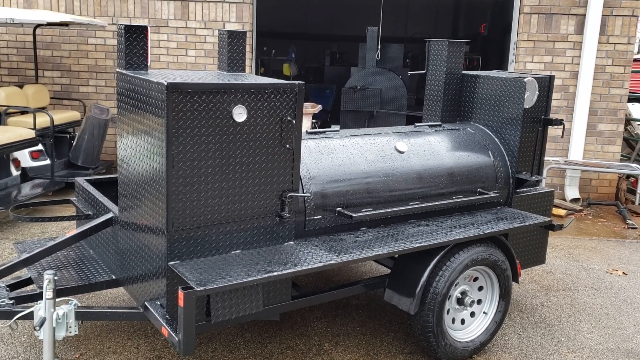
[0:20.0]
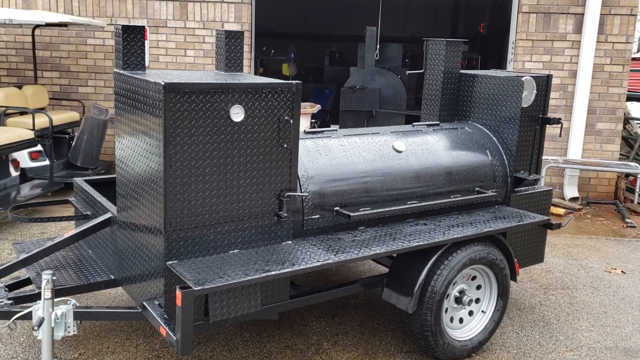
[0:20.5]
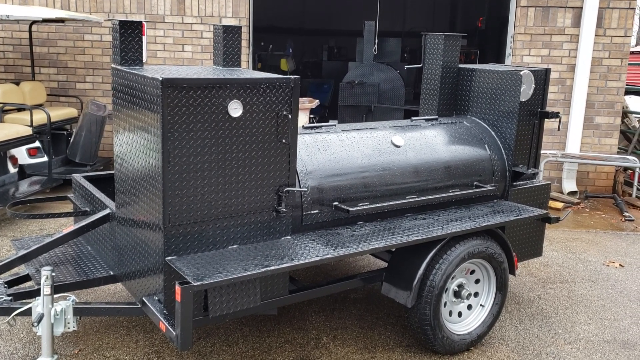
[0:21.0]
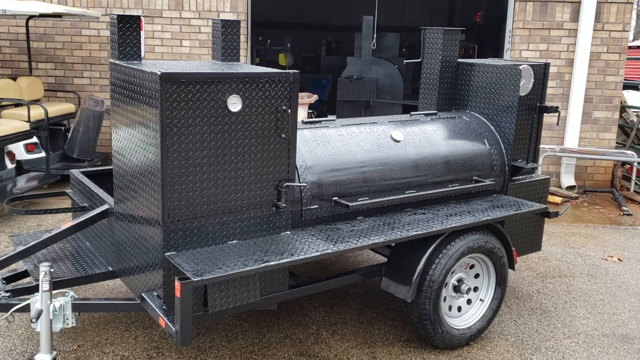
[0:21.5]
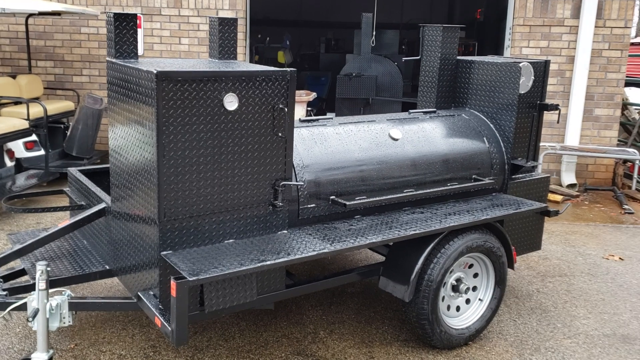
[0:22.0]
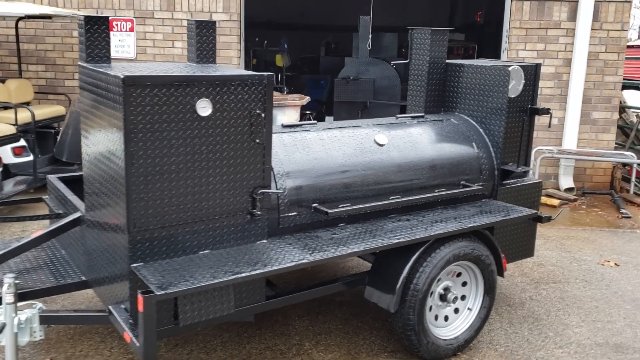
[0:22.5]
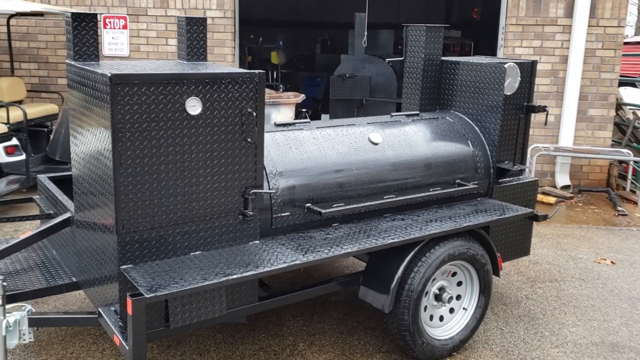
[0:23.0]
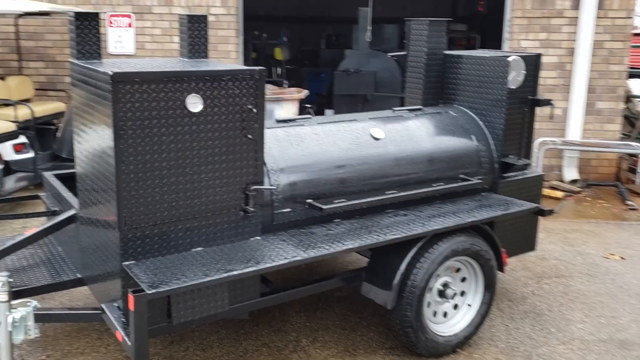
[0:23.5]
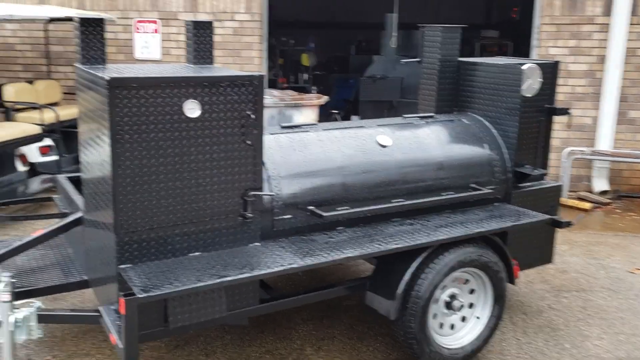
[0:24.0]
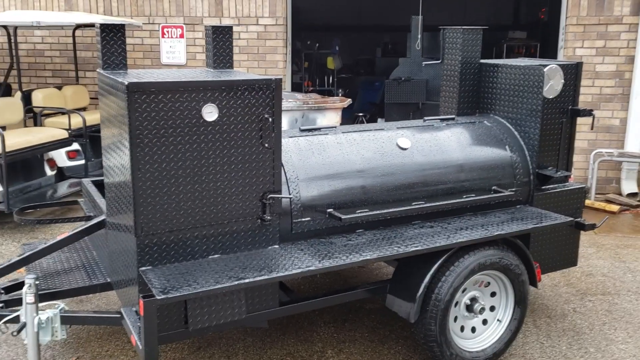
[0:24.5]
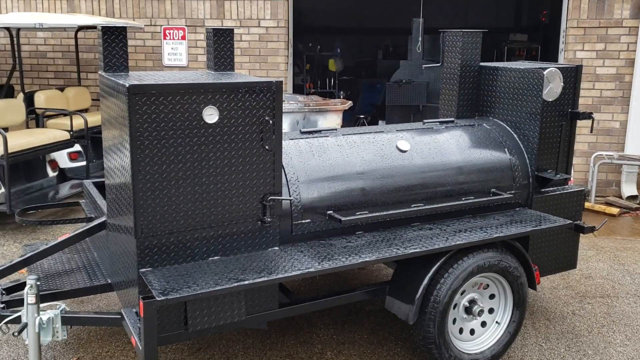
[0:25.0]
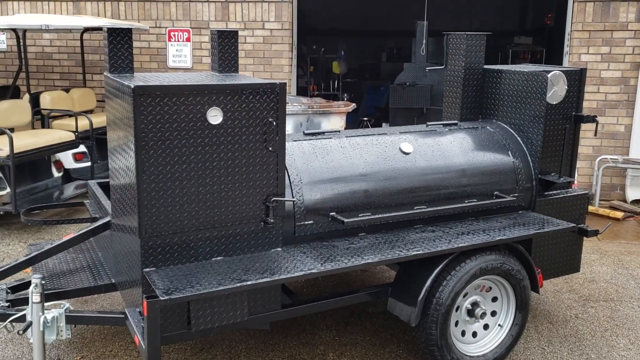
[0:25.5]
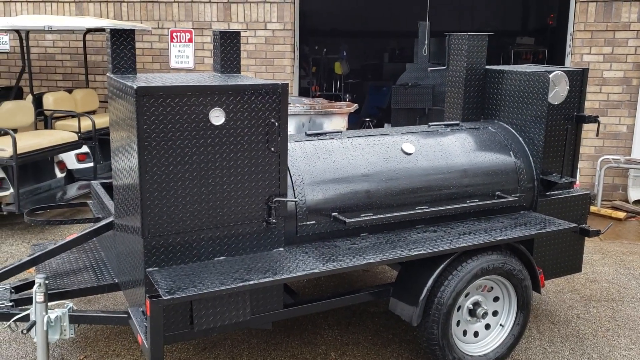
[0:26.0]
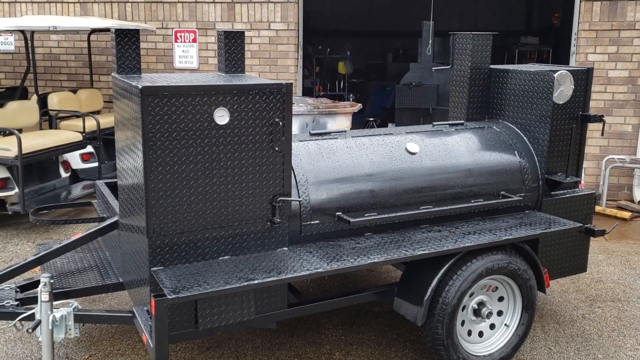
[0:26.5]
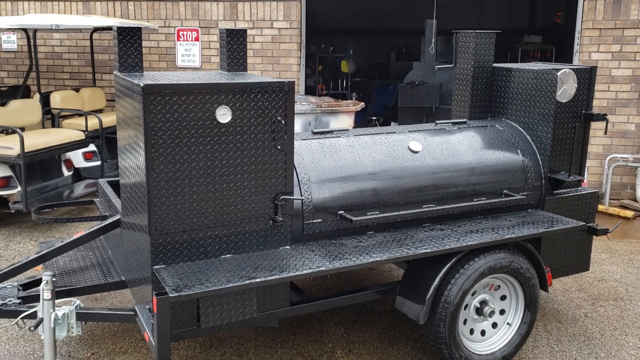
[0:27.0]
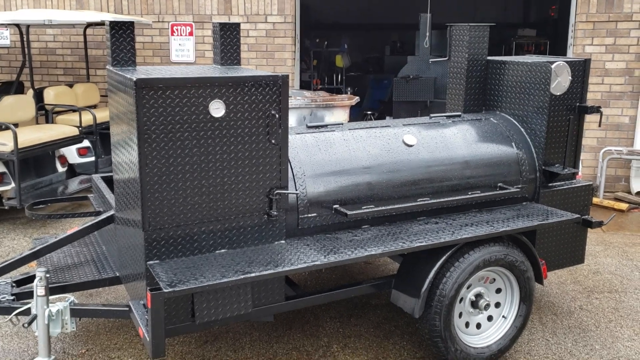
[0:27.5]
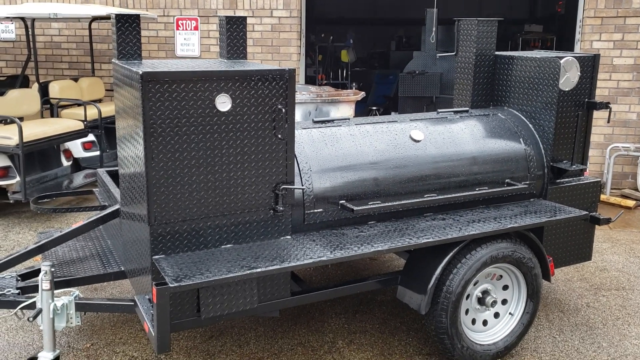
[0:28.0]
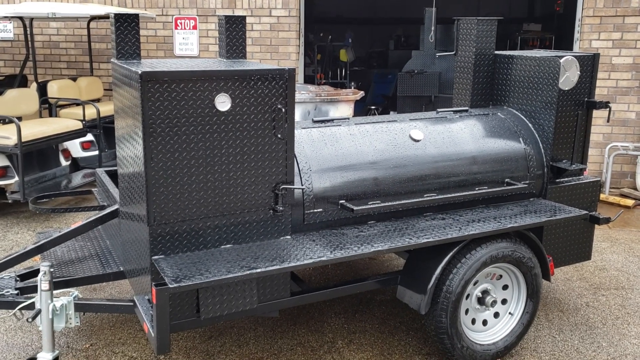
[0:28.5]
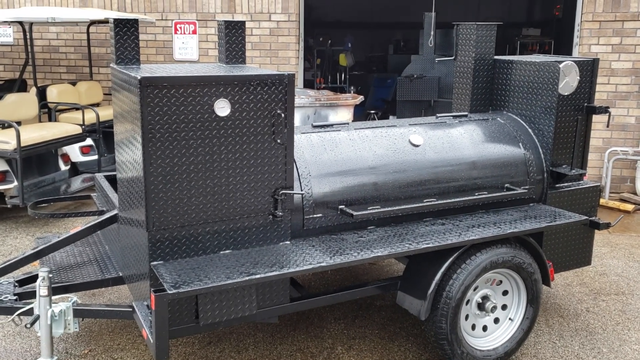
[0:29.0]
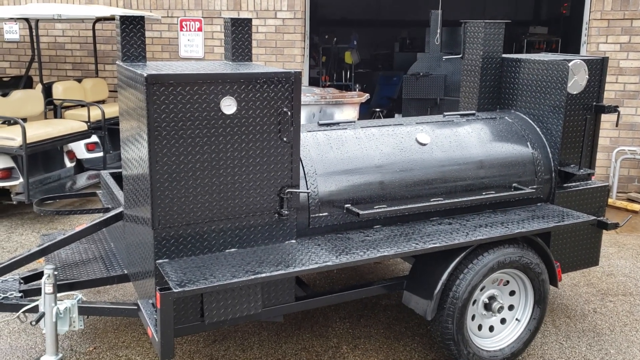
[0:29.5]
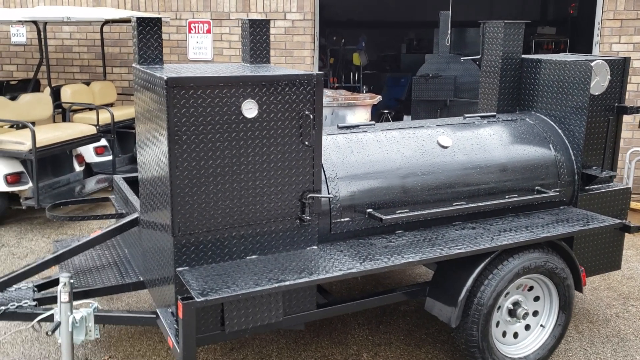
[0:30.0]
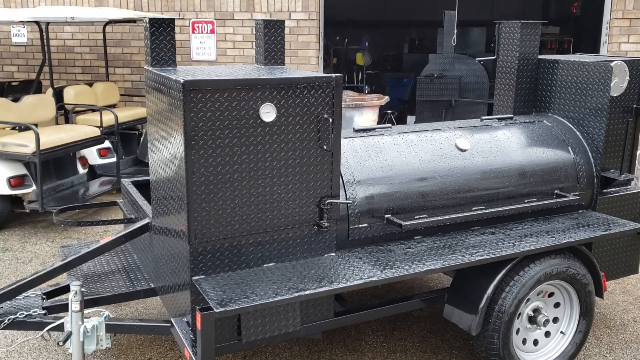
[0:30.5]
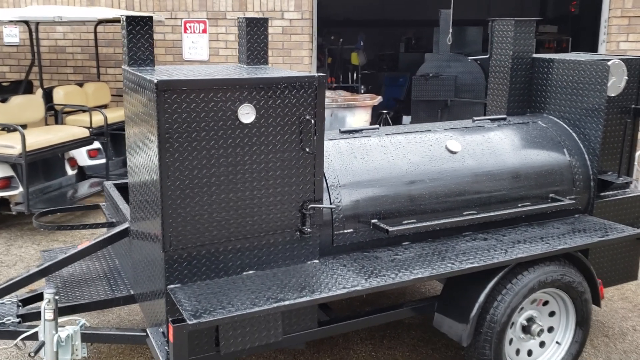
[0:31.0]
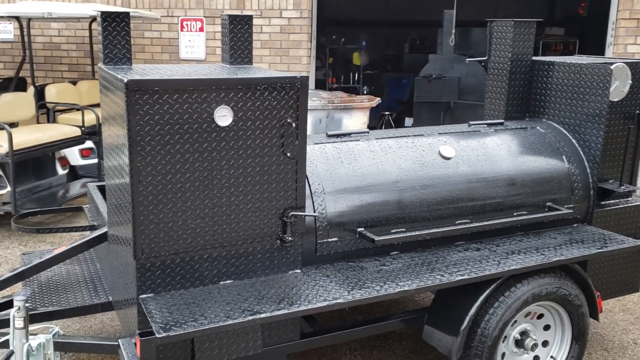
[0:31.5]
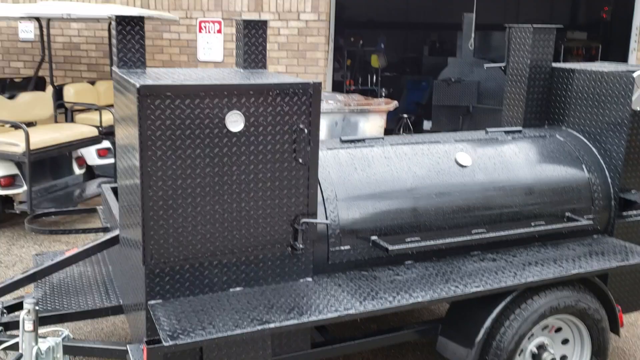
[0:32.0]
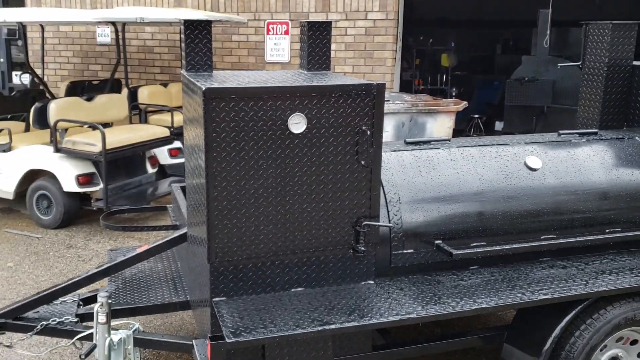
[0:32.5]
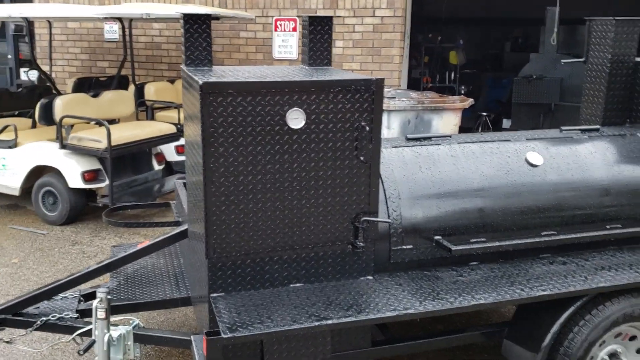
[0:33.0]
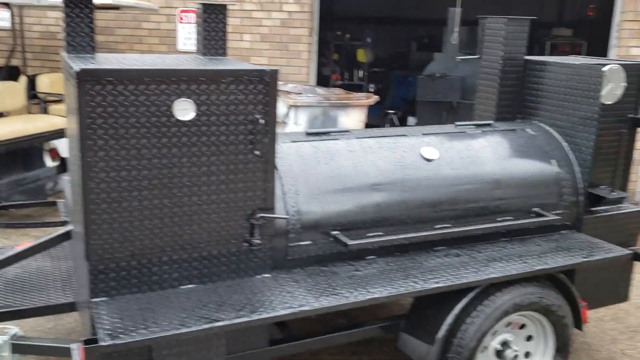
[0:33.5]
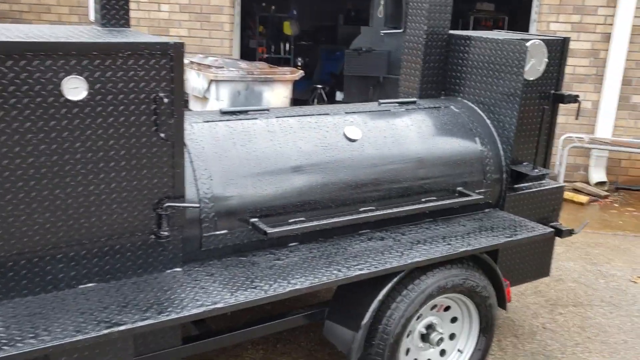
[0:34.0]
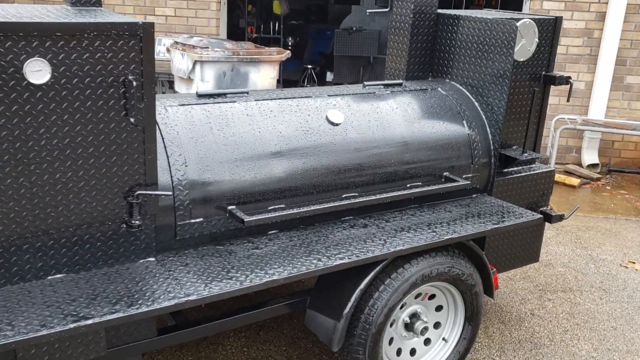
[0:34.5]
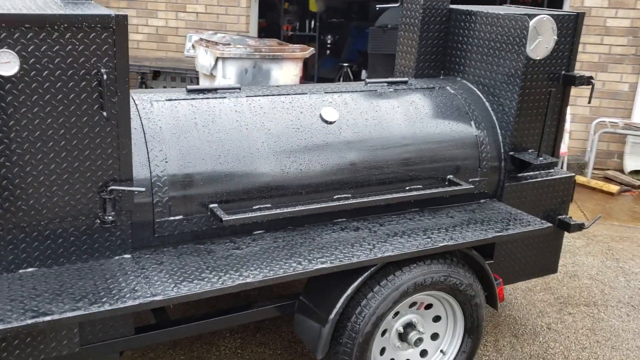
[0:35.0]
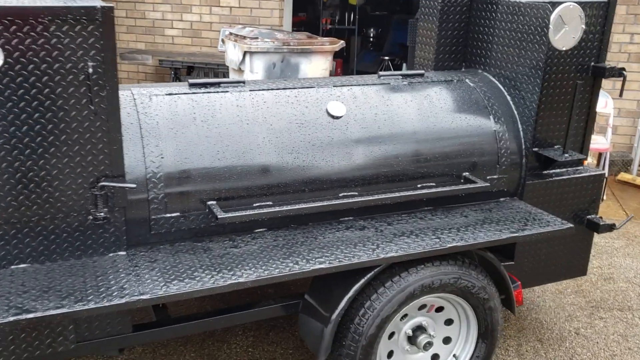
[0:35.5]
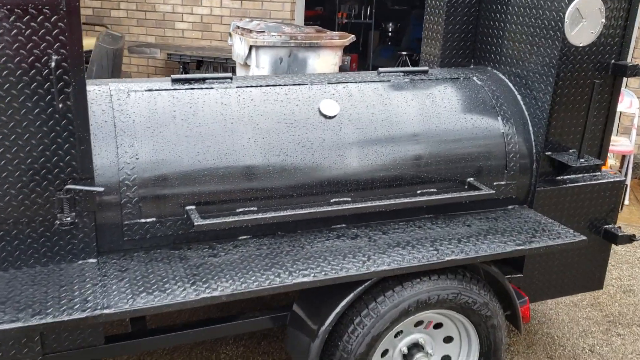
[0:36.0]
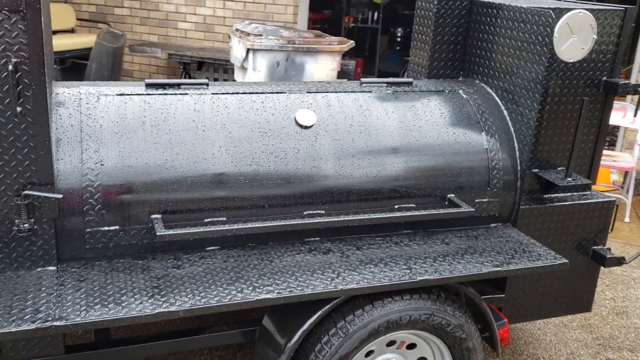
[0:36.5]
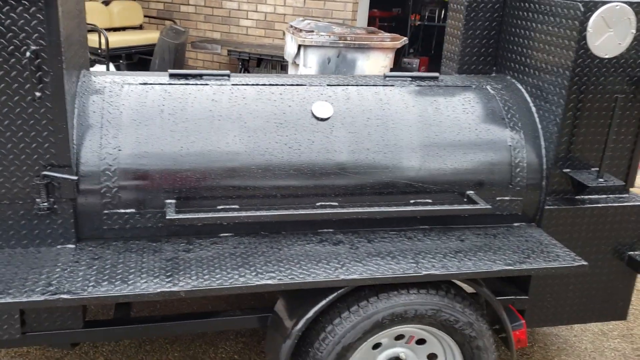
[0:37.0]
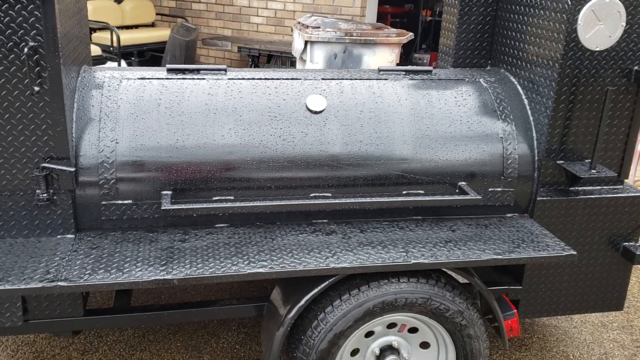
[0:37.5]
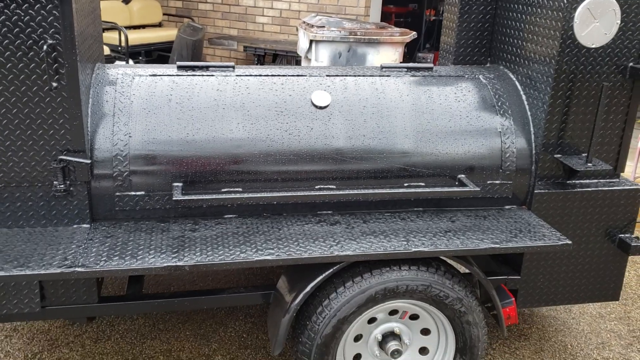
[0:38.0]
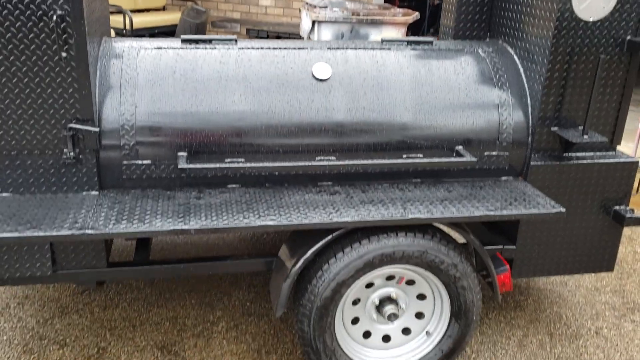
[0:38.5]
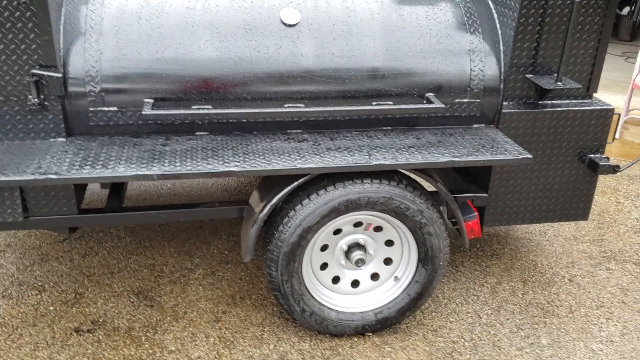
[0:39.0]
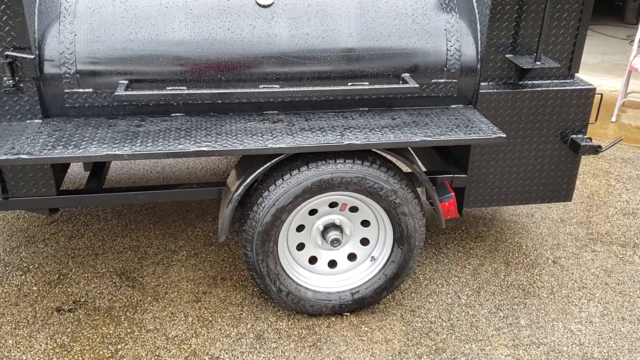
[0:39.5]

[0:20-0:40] The open storeroom holds the two golf cars and the black two-wheeled trailer that looks like a braai stand. On its side there is some space with two doors, and the whole thing is made of metal. The cars and the trailer stand still. To the side there are other things such as metals, and a red door is on the far right. A stop sign is on the wall. The two golf cars are two-seaters, white and black, with red lights, and the braai stand trailer has a red light too. A white dustbin or rubbish bin is on the left side.